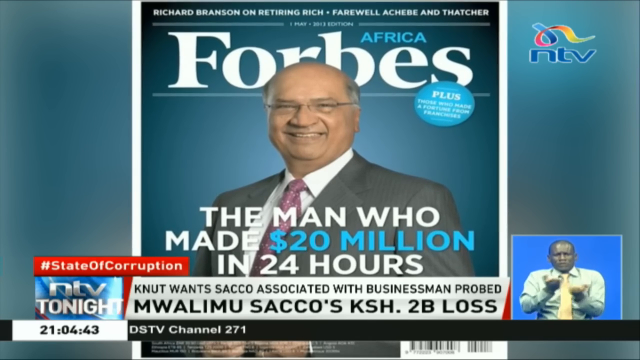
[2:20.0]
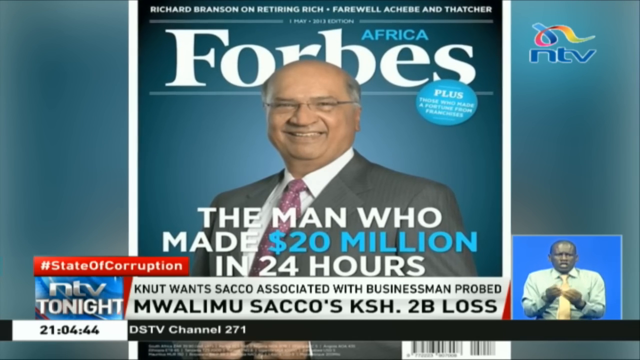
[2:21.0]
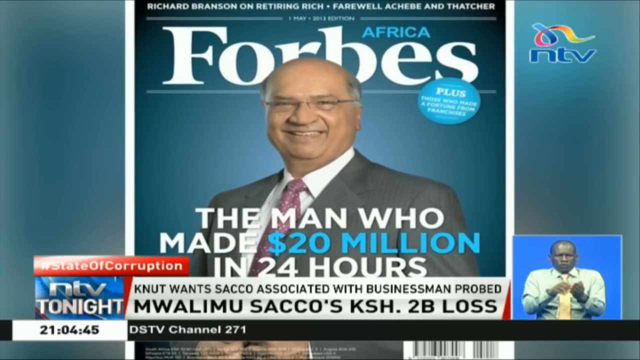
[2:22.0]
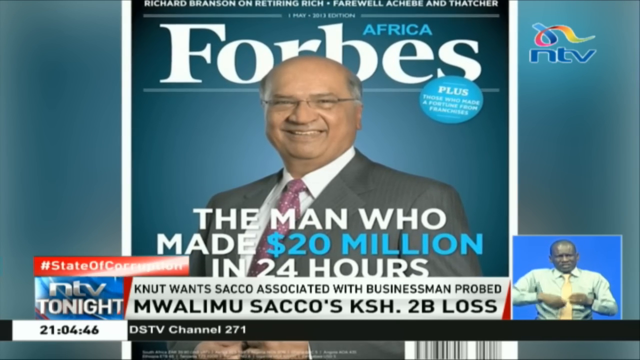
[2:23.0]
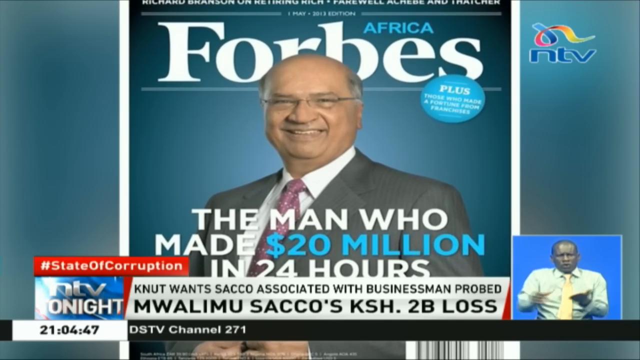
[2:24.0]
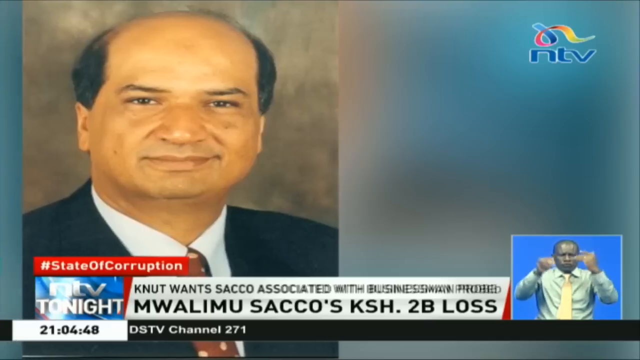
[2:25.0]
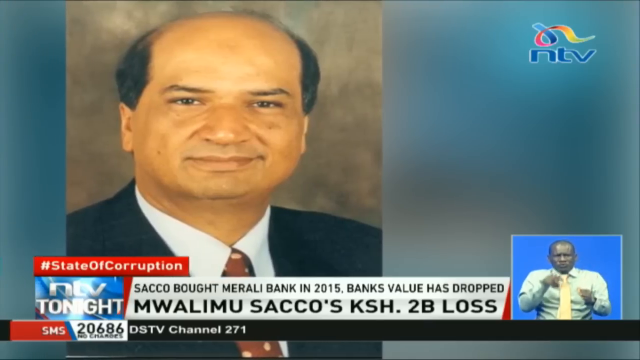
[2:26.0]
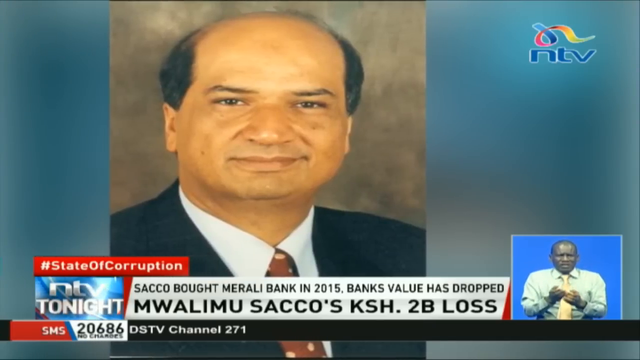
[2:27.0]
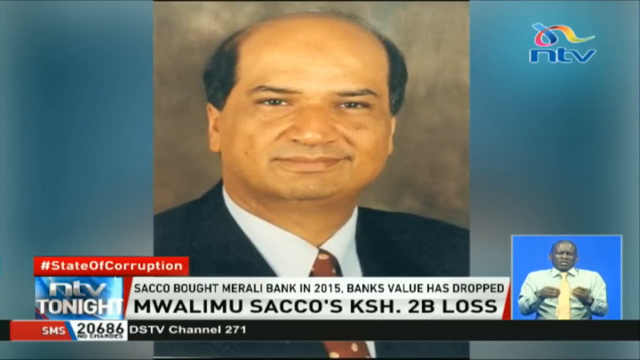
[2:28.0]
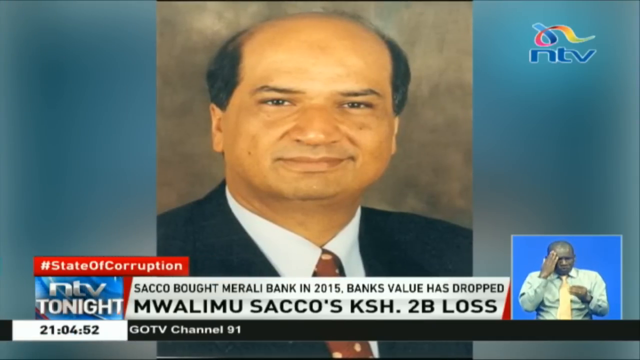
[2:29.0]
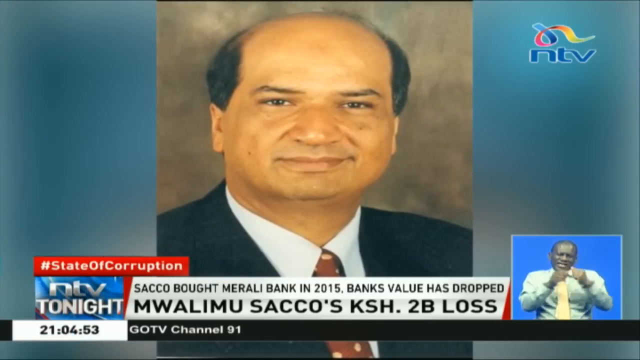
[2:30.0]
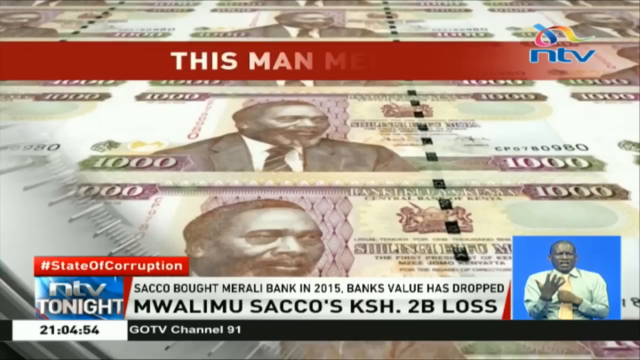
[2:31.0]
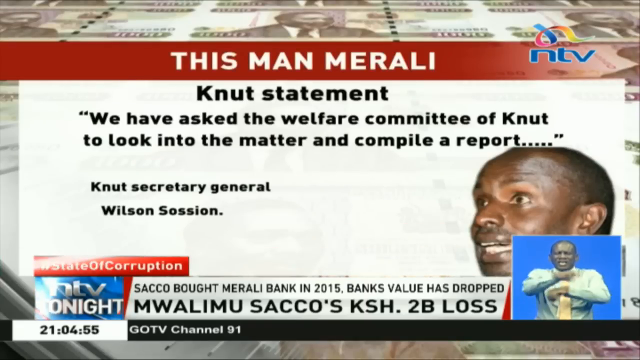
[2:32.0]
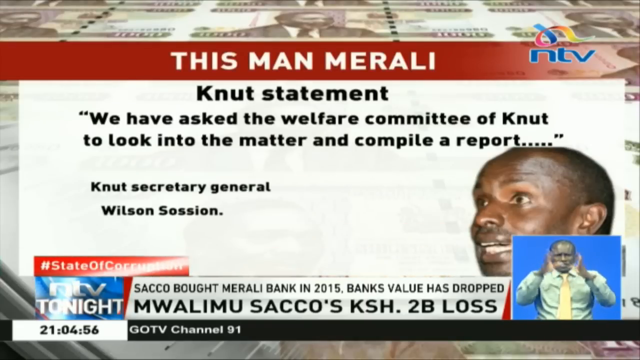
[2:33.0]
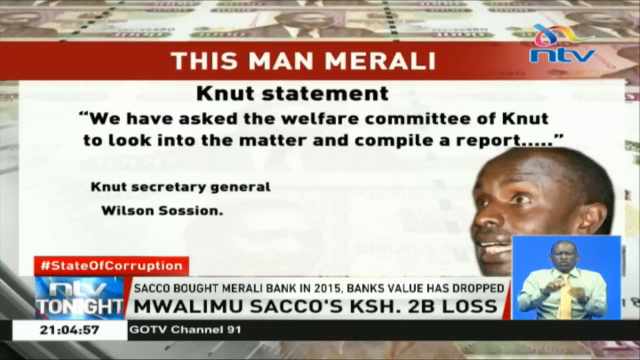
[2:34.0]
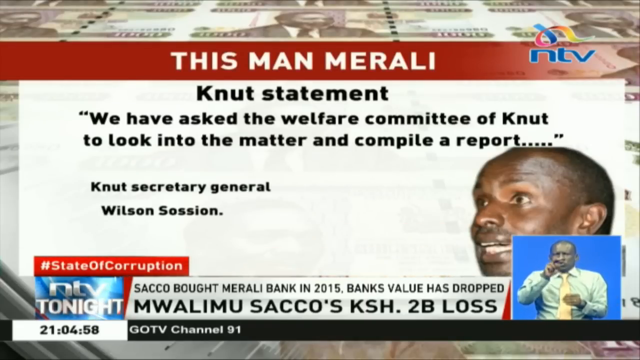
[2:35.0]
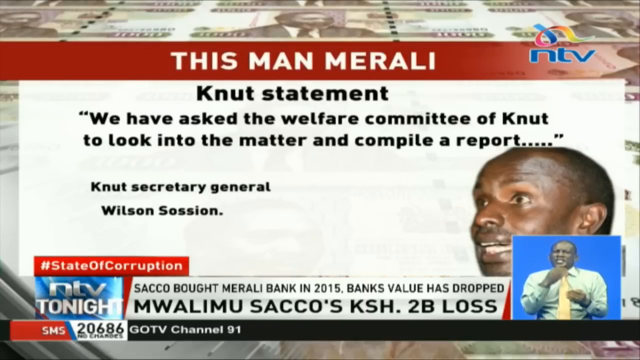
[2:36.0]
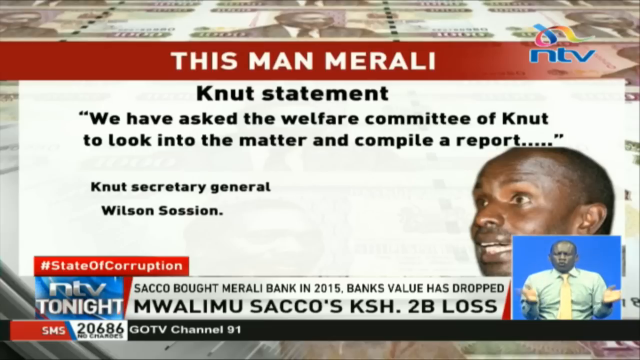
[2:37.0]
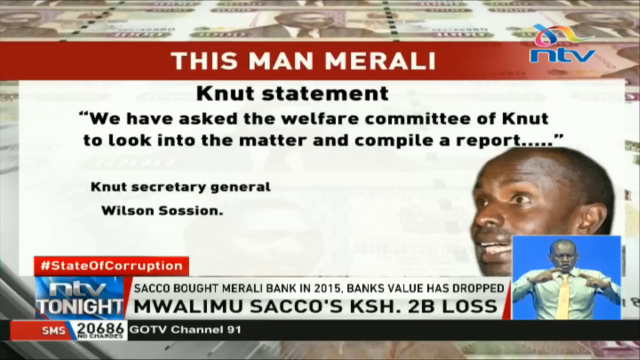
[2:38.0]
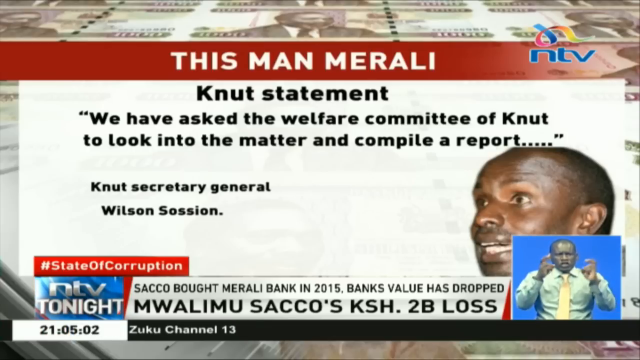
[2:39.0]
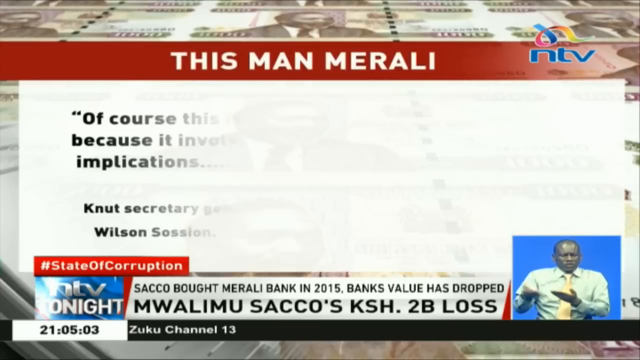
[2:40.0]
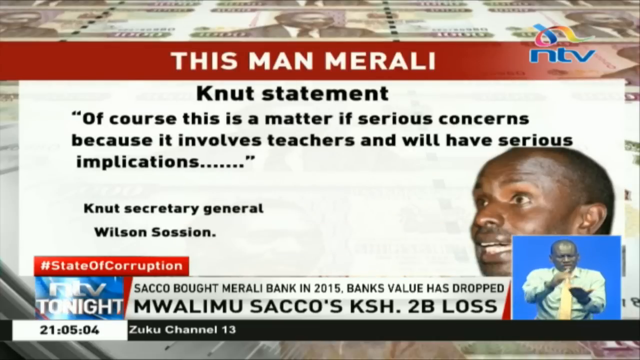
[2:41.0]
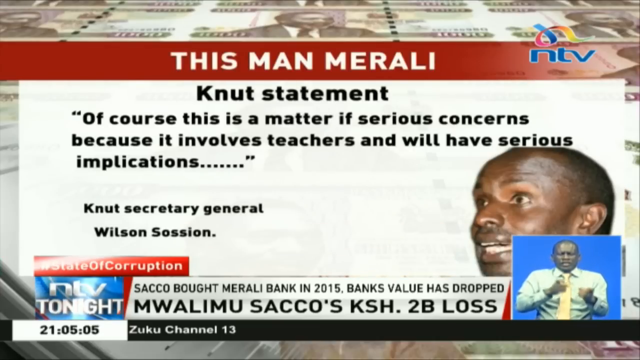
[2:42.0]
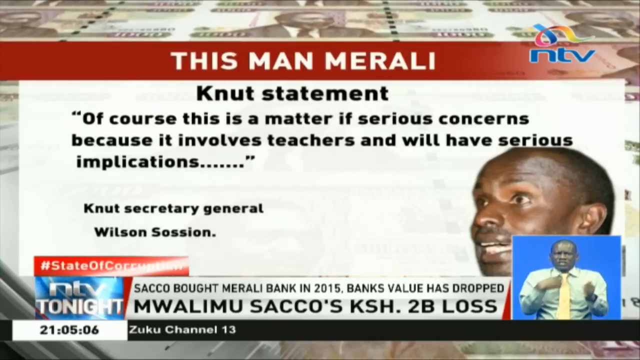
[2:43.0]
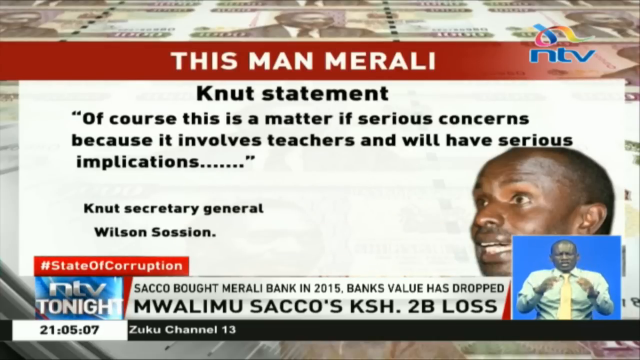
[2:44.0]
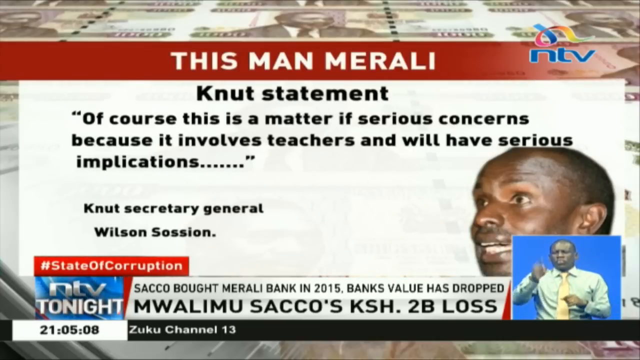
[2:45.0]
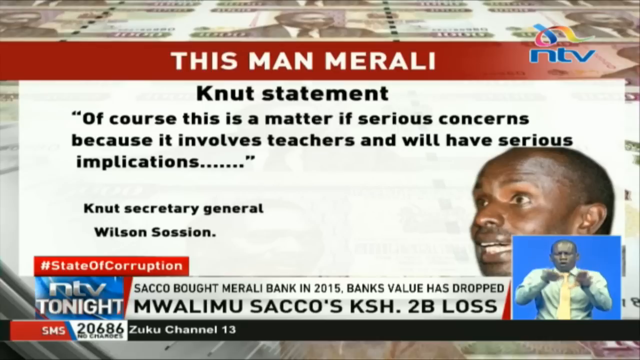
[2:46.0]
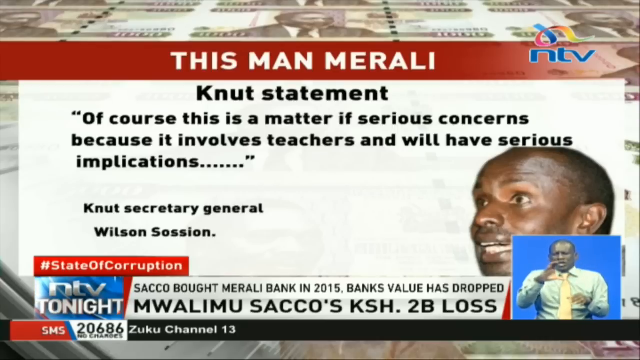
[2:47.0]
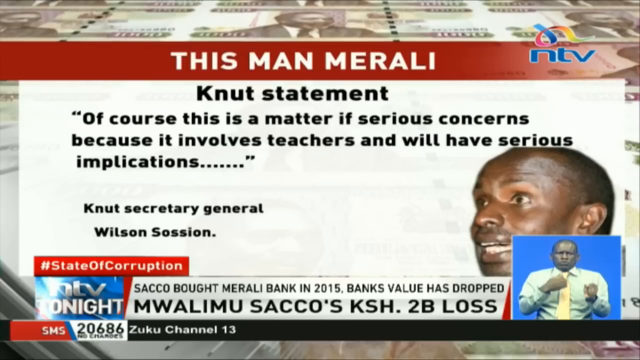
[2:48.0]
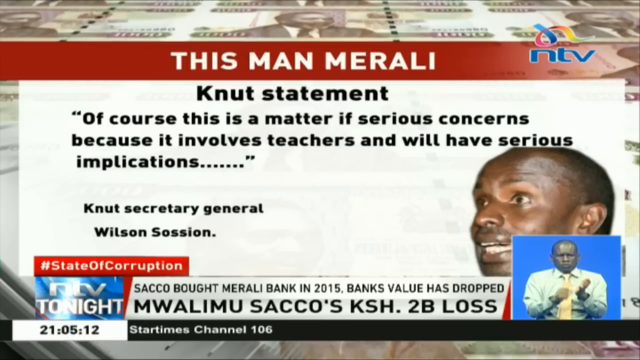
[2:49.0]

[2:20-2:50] The NTV broadcast continues, with the emblem in blue letters and a swirling ribbon above it in the upper right corner of the screen. The screen shows an Africa Forbes magazine. At the top, text reads "Richard Branson" and "retiring rich", along with "farewell ARACHEBE and Thatcher". The headline reads "The man who made $20 million in 24 hours". The man pictured is in his early to mid 60s, balding, Caucasian, with gray hair and glasses, wearing a gray suit, a pink tie and a white shirt. At the bottom are "State of Corruption", "NTV Tonight" and "KNUT wants SACO associated with businessman probed". To the right, a small screen shows someone signing for the hearing impaired.